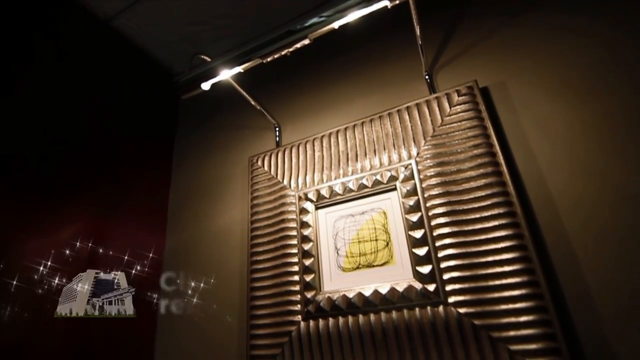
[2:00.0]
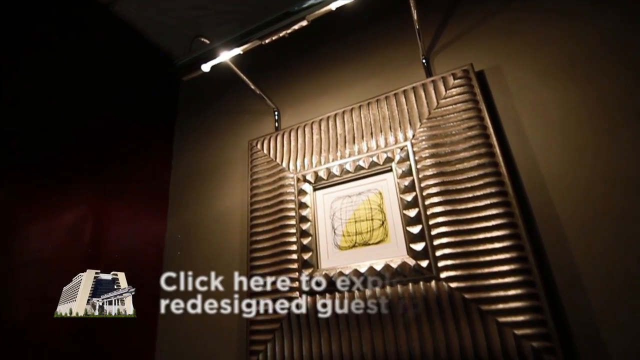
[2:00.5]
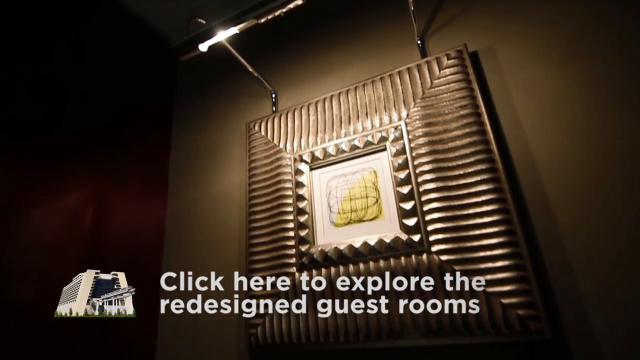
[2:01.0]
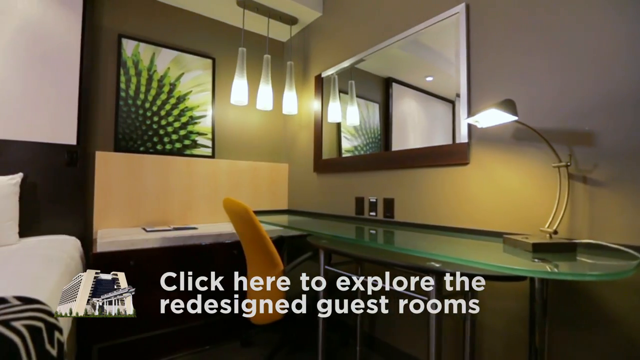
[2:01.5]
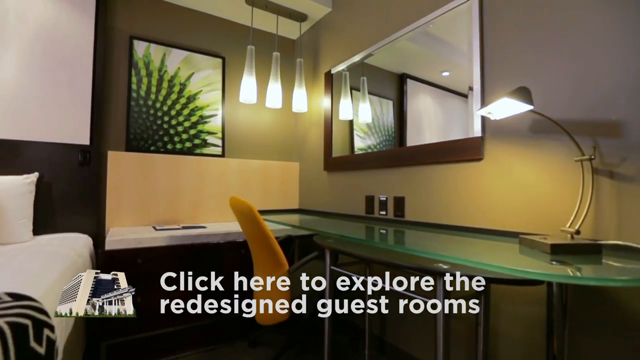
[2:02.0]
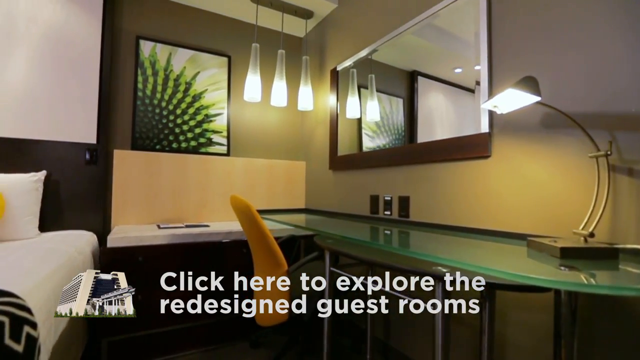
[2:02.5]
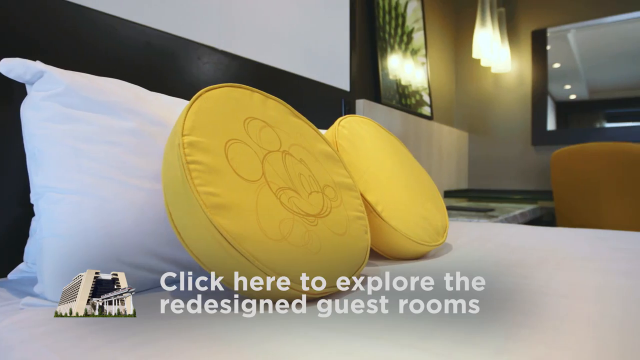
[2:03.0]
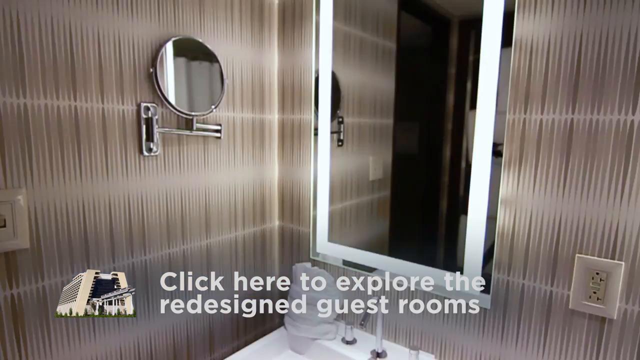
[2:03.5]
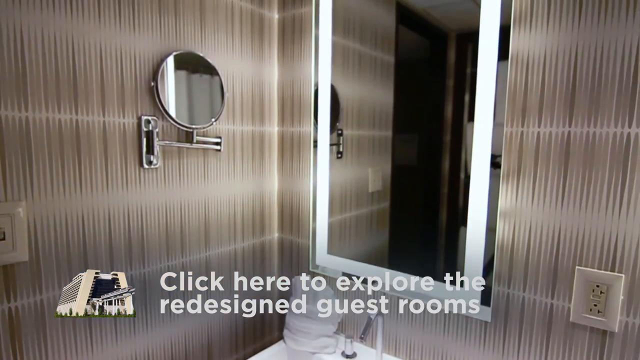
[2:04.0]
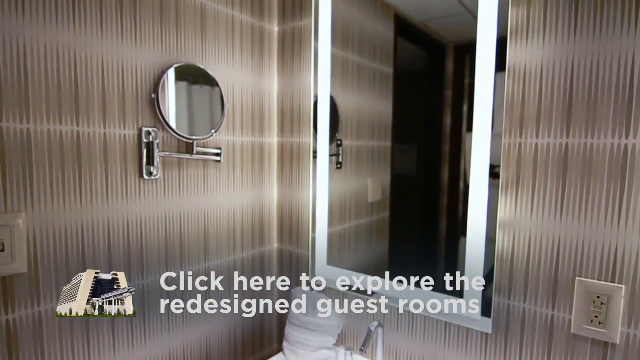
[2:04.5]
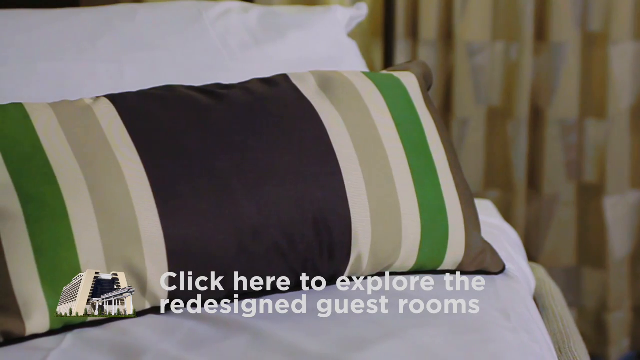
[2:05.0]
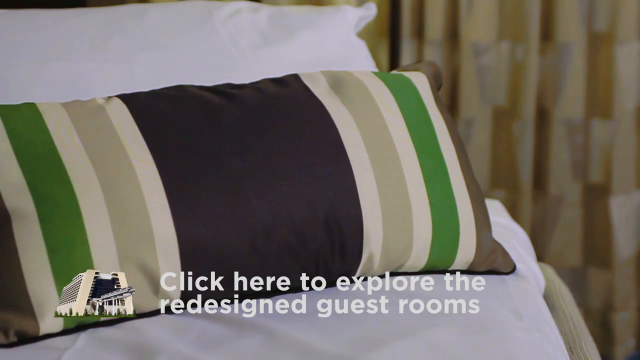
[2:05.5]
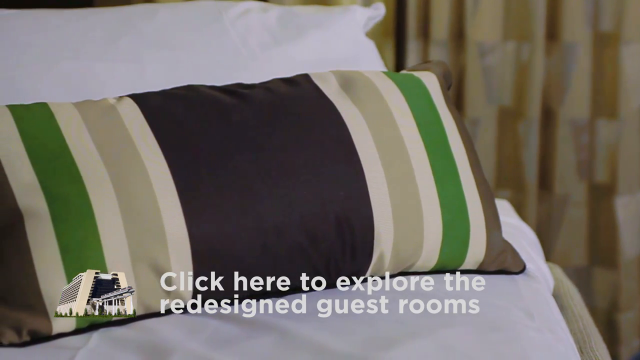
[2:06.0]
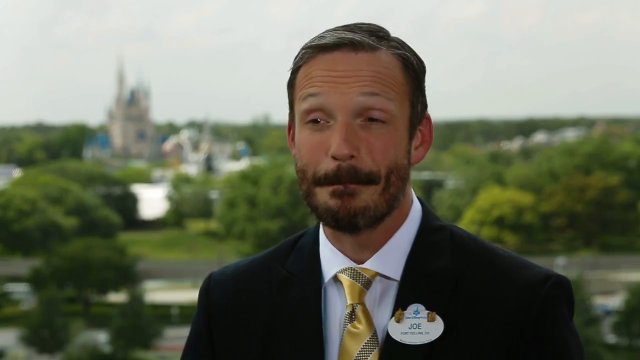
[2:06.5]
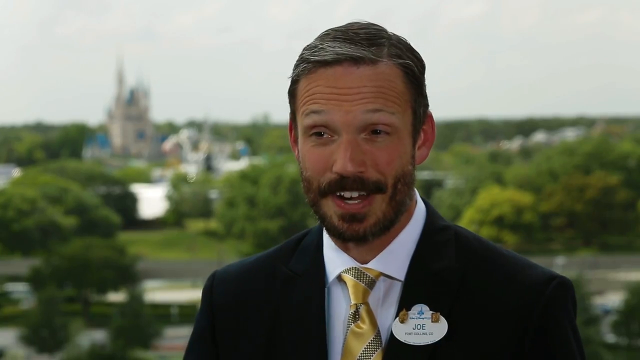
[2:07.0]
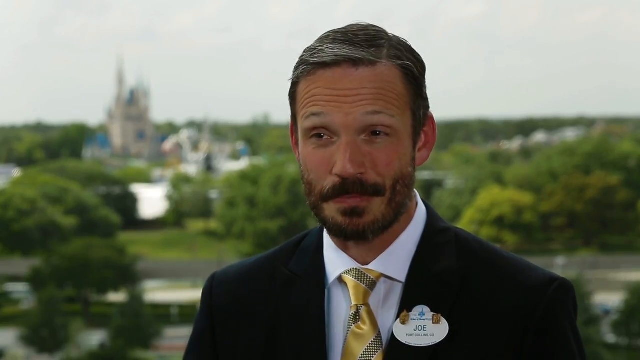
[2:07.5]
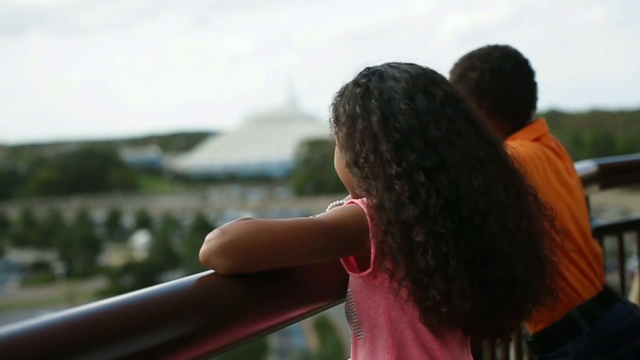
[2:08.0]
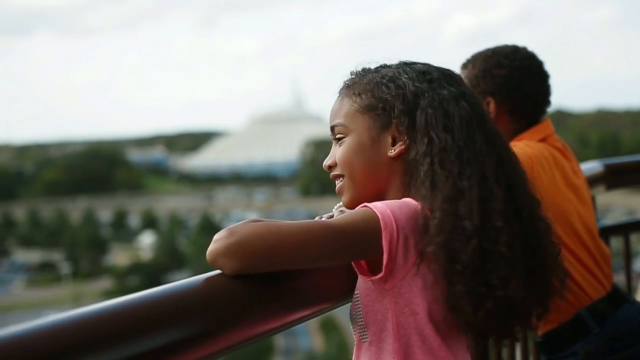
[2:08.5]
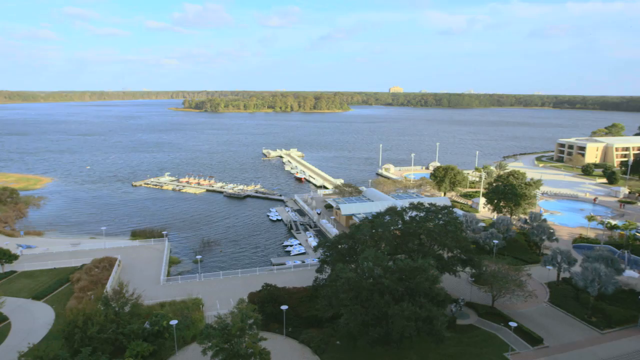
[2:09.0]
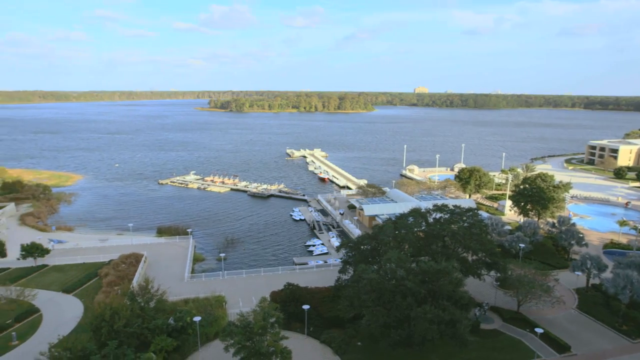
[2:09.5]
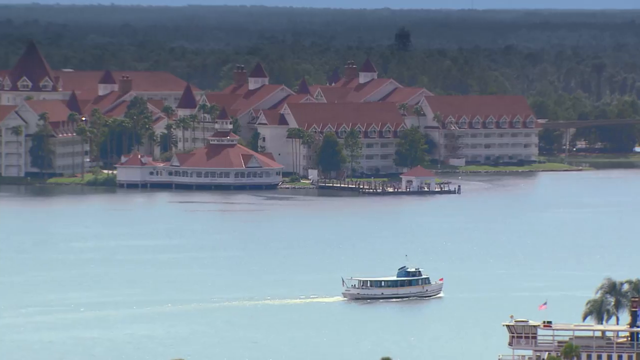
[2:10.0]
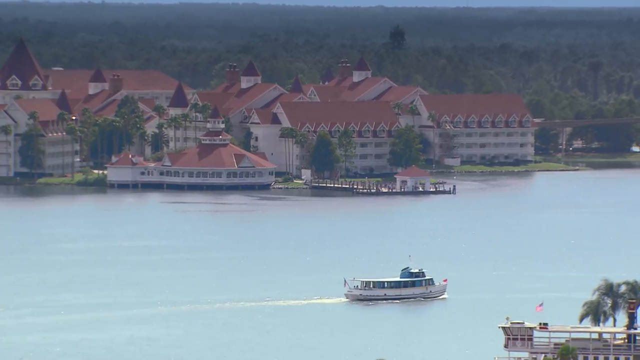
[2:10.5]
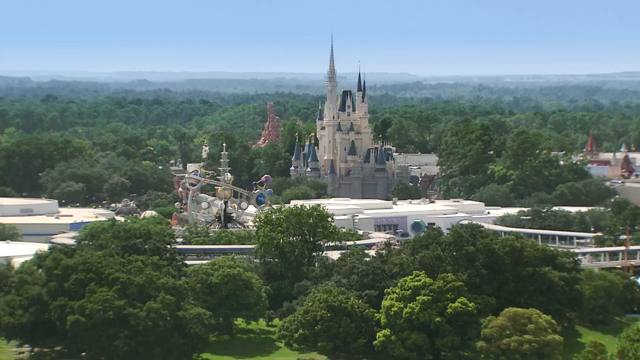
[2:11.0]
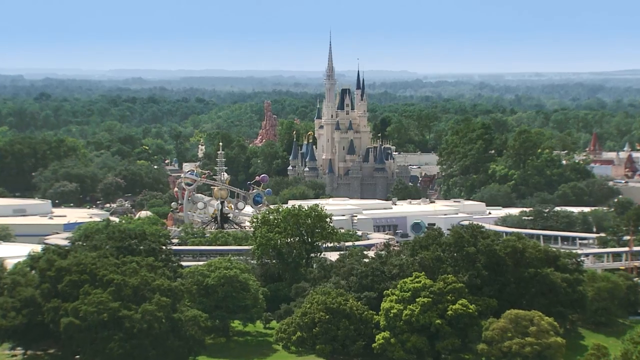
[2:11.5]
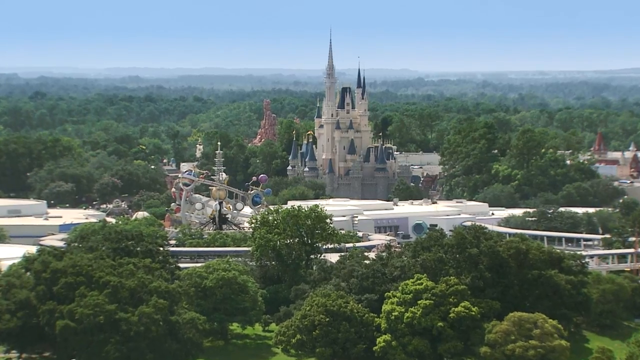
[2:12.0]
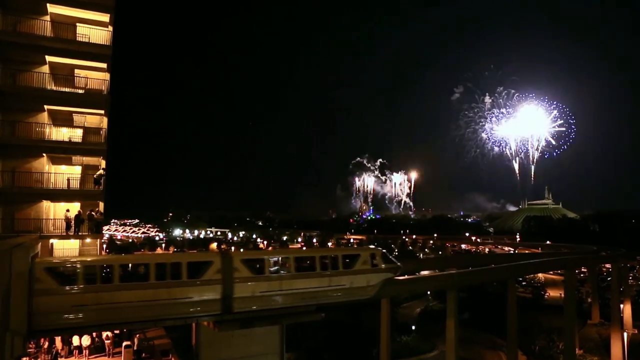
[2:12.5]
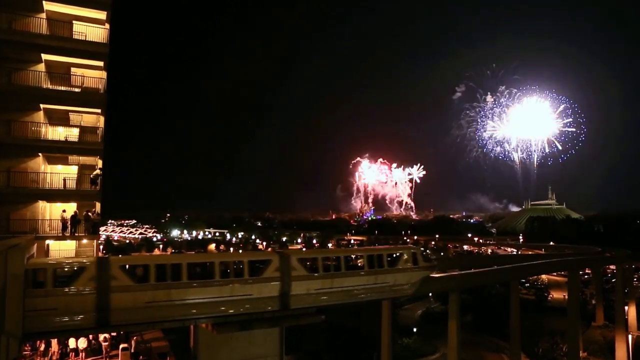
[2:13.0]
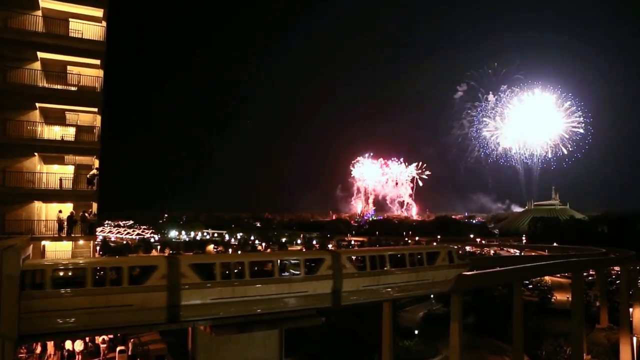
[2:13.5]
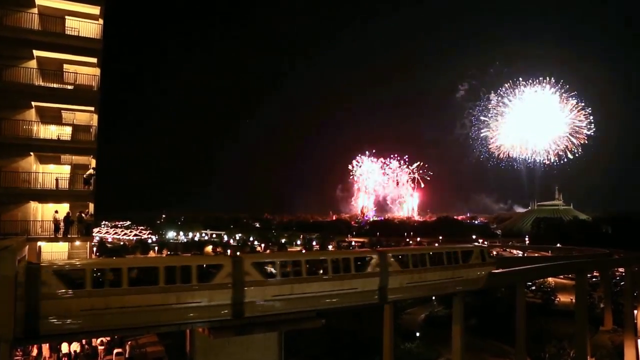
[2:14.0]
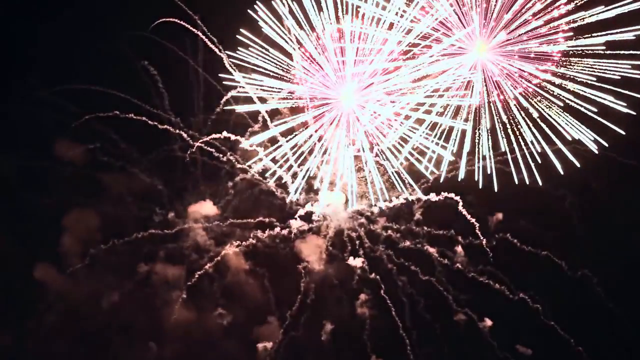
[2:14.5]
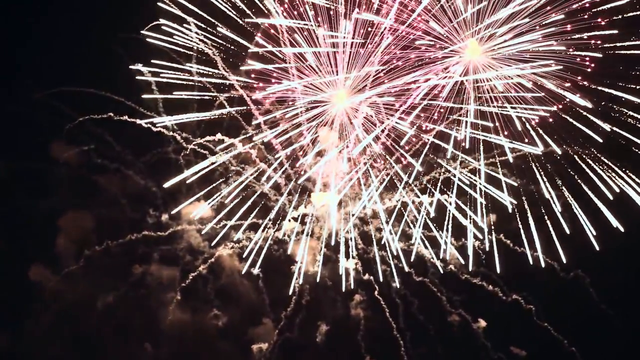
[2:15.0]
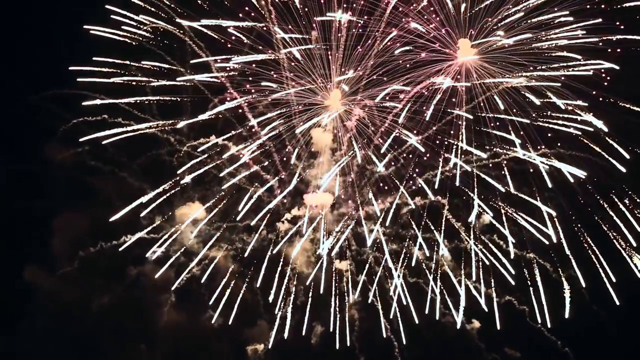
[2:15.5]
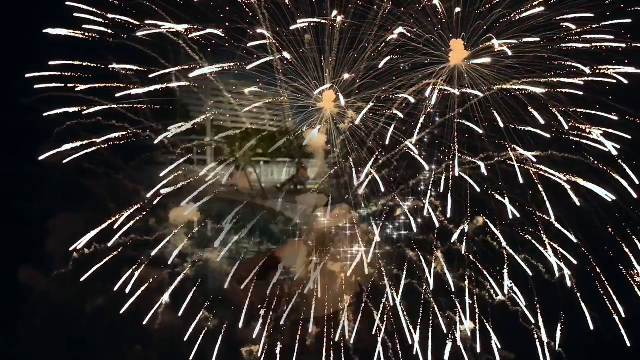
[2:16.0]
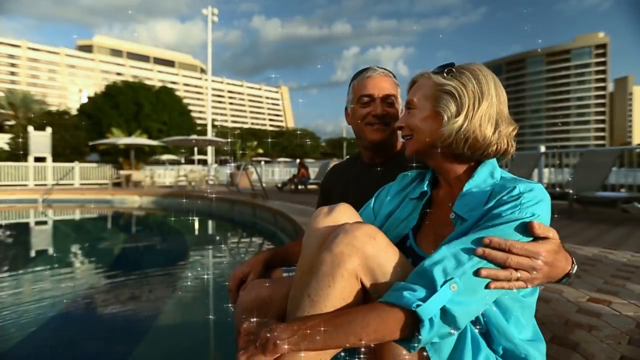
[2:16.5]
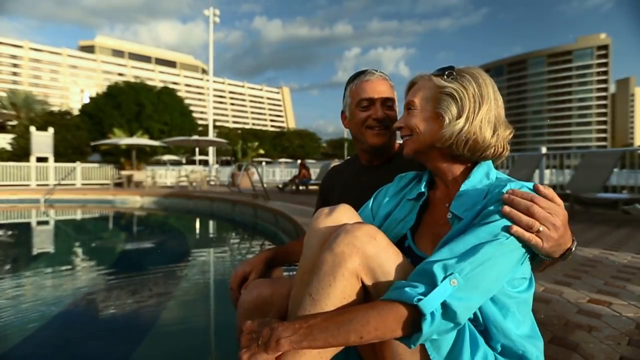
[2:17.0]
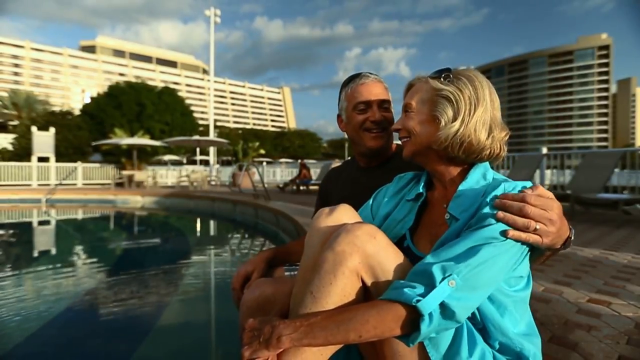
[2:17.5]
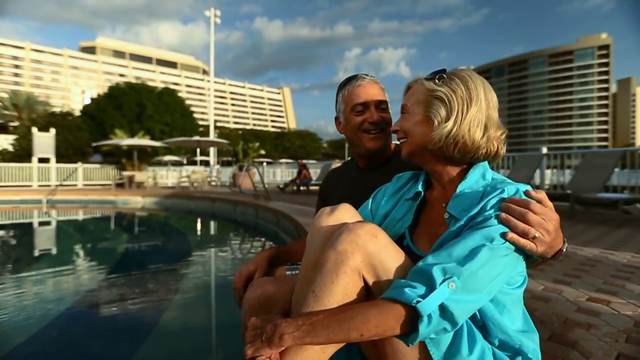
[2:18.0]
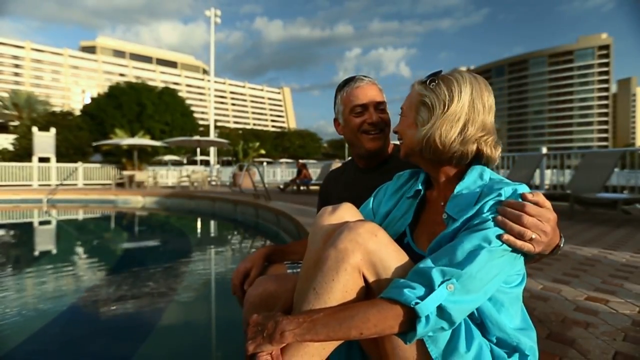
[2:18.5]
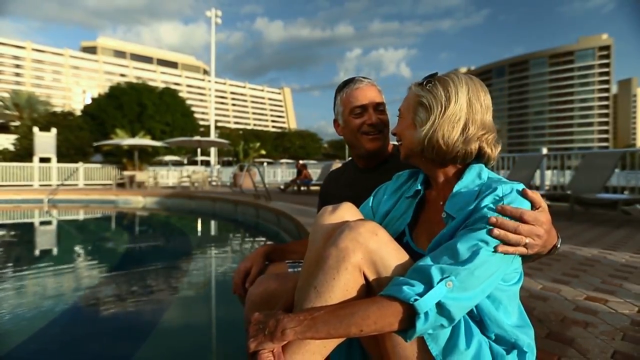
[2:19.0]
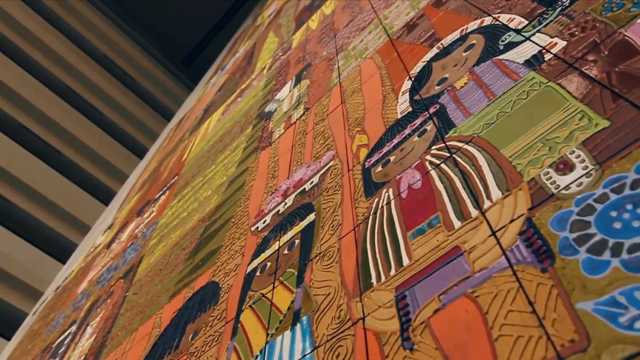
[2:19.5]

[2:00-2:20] Under the title "Disney's Contemporary Resort, Walt Disney World," an interior shot of a guest room shows an art light displayed over a framed piece of art hanging in the room. The guest bed and desk are shown in more detail; the bed has white sheets and two pillows, apparently yellow, with Mickey's face drawn on them. A caption reads "click here to explore the redesigned guest room." More interior shots of the guest bathroom follow. Joe Kennedy then appears on screen wearing a gold tie and a dark suit, and two young children stand at a railing looking out over the resort. A boat is on the water across from the resort. The video spans to the castle in the park and nighttime footage of the monorail going underneath a fireworks display, ending with an older couple sitting at the resort pool smiling at each other.